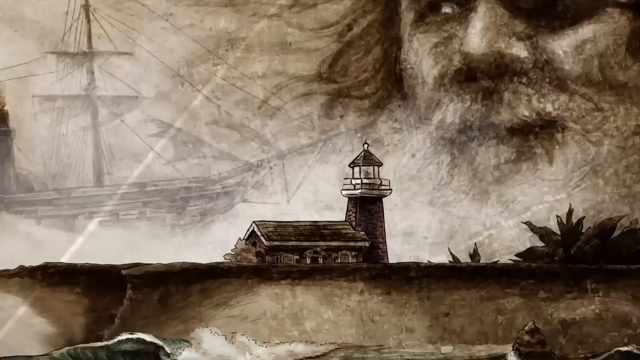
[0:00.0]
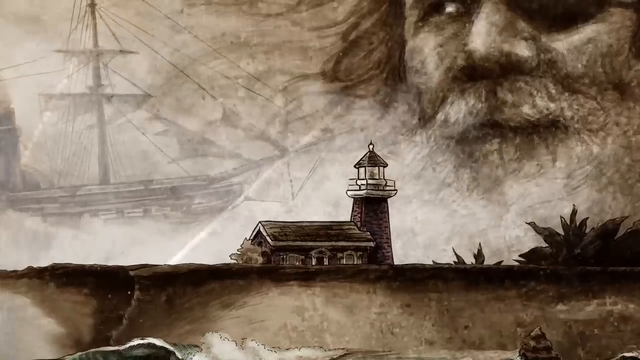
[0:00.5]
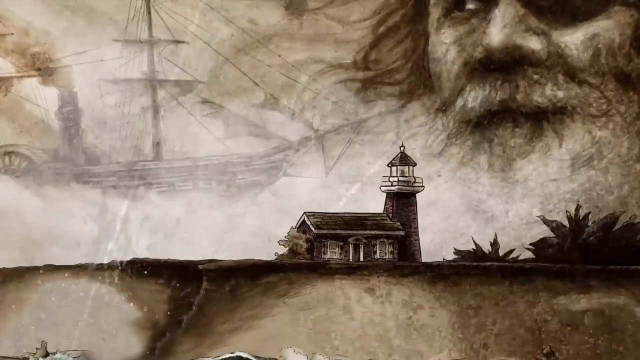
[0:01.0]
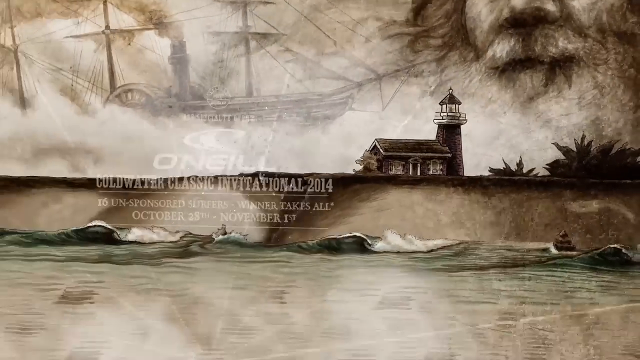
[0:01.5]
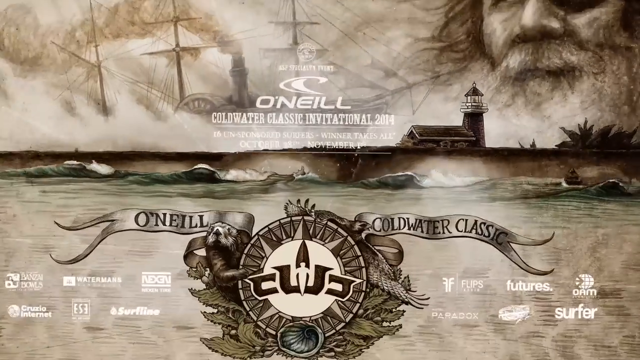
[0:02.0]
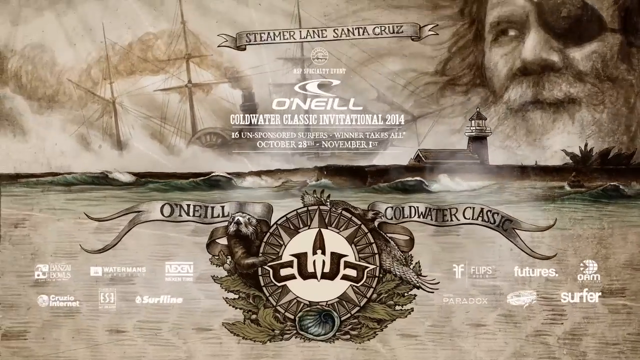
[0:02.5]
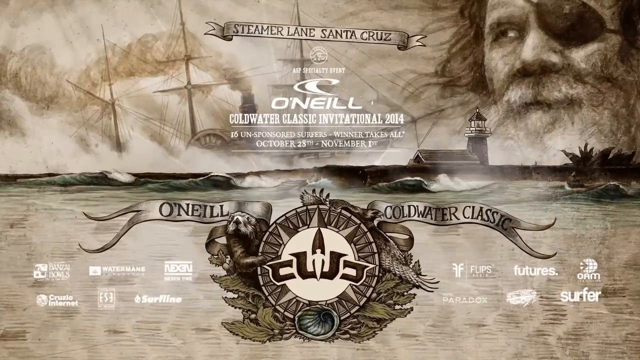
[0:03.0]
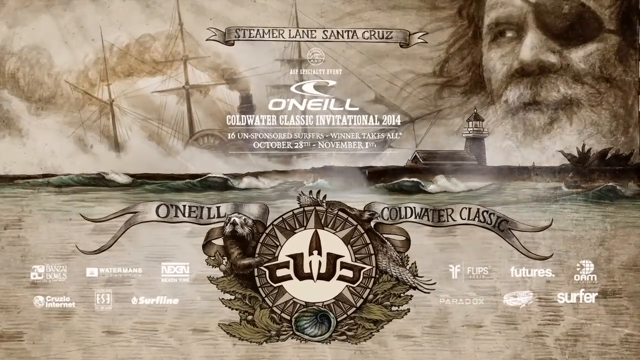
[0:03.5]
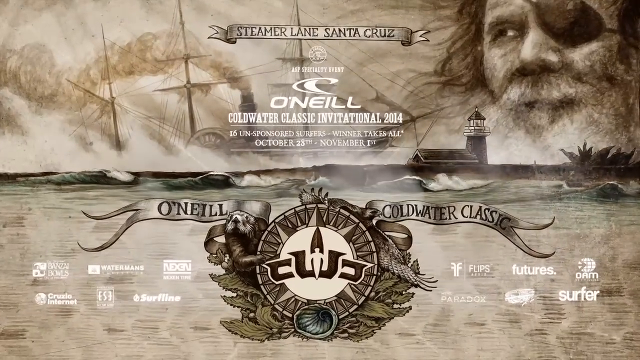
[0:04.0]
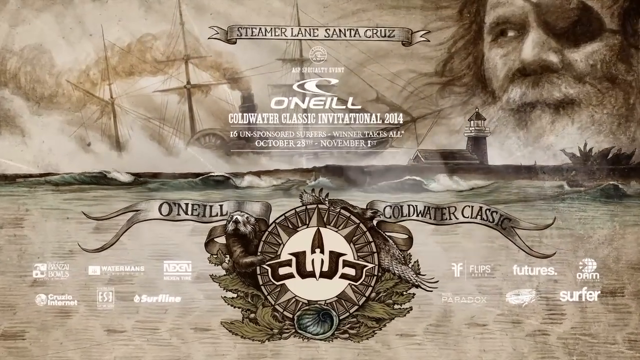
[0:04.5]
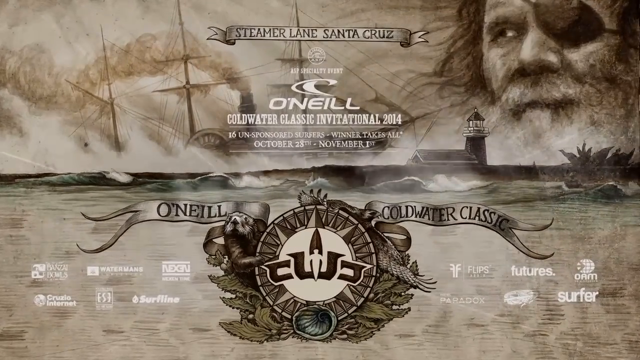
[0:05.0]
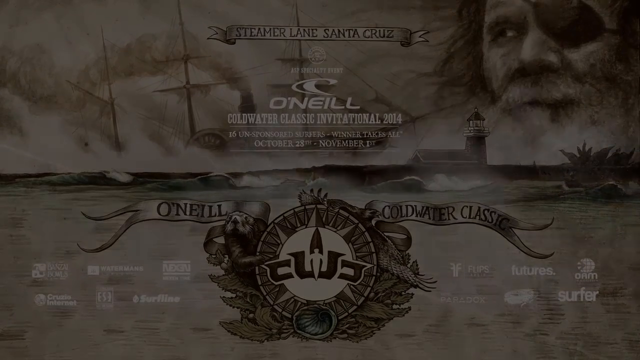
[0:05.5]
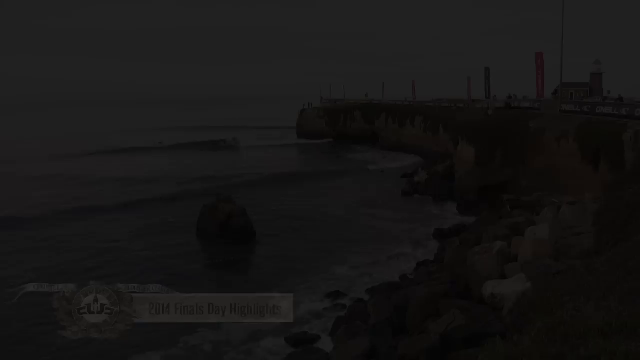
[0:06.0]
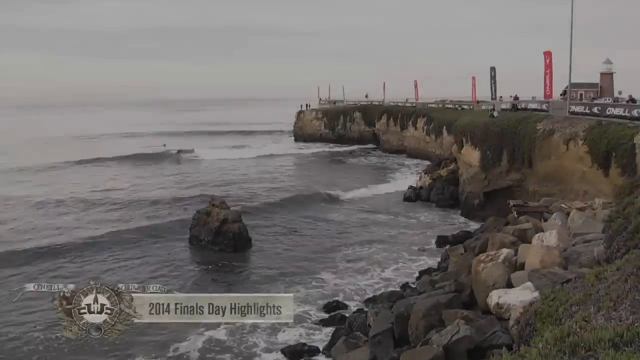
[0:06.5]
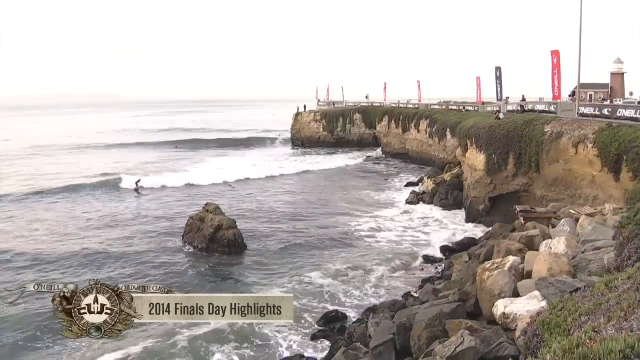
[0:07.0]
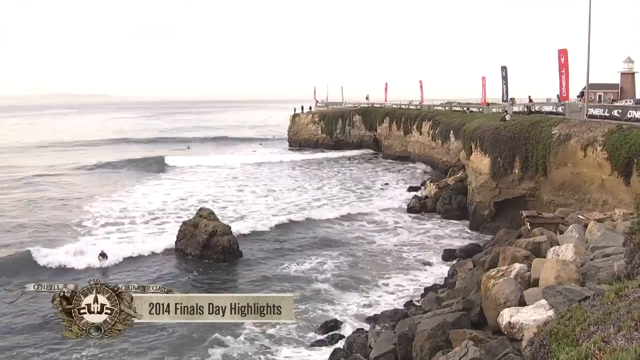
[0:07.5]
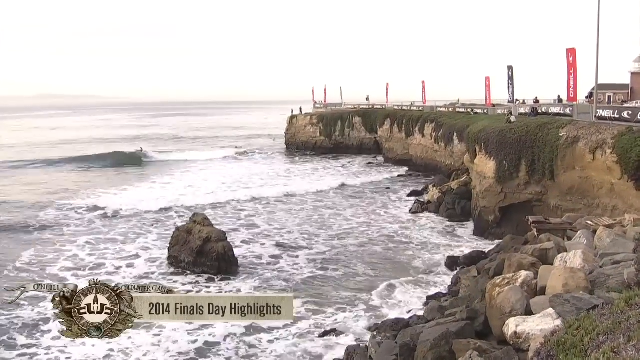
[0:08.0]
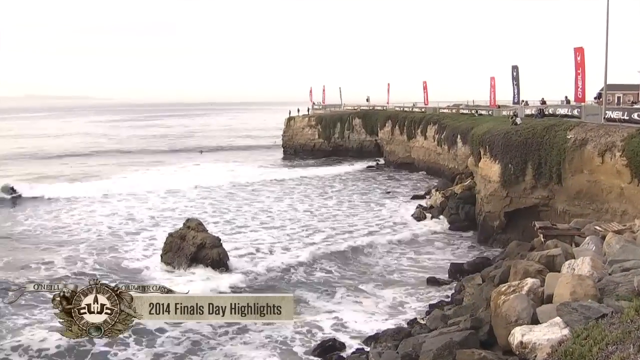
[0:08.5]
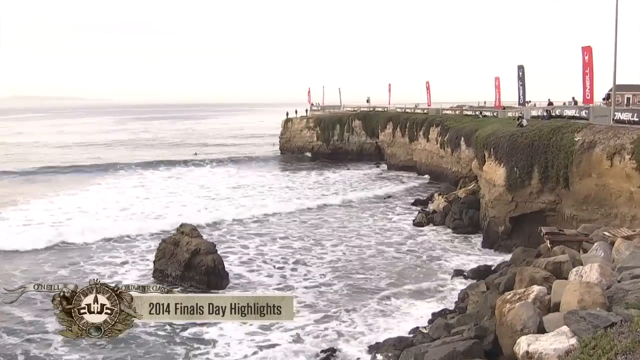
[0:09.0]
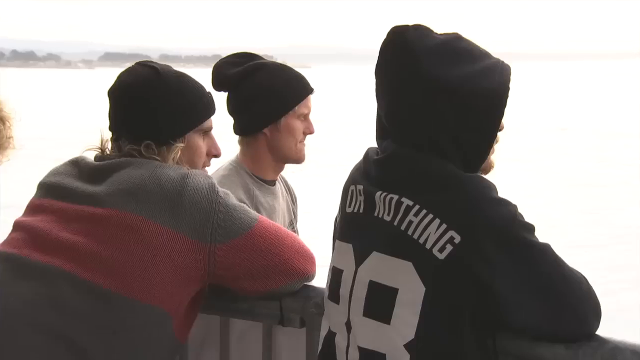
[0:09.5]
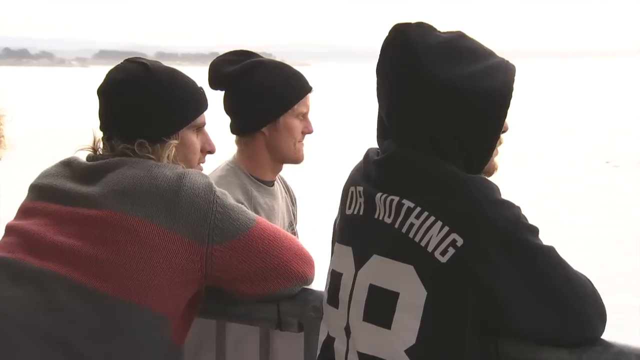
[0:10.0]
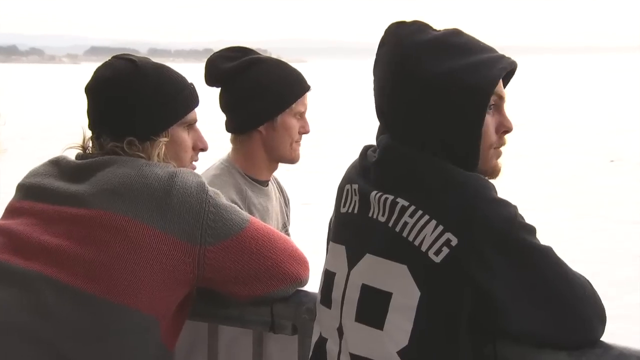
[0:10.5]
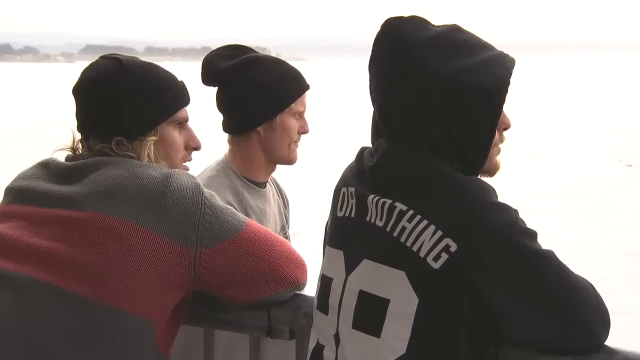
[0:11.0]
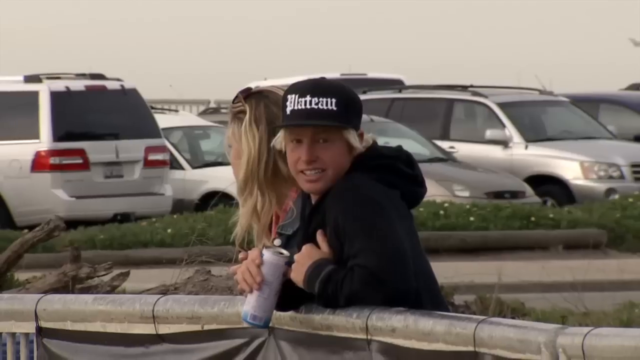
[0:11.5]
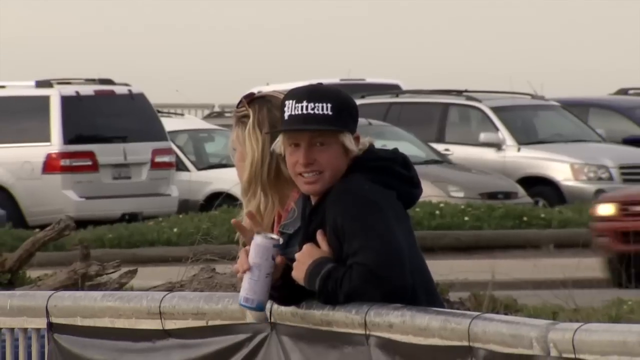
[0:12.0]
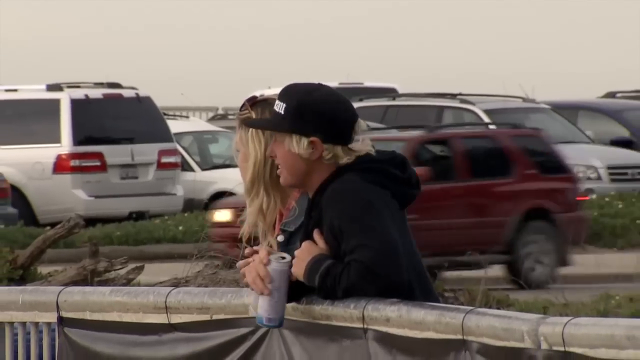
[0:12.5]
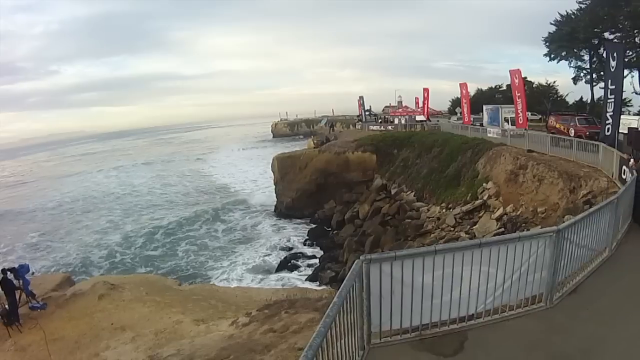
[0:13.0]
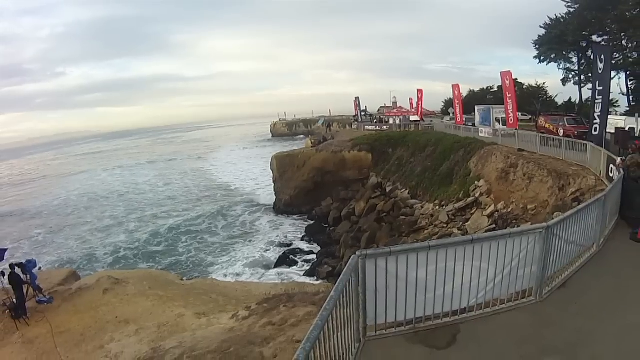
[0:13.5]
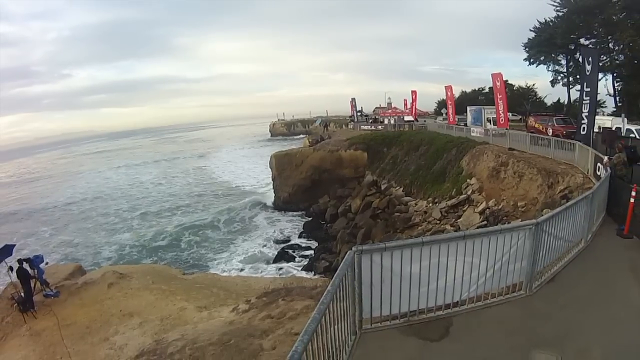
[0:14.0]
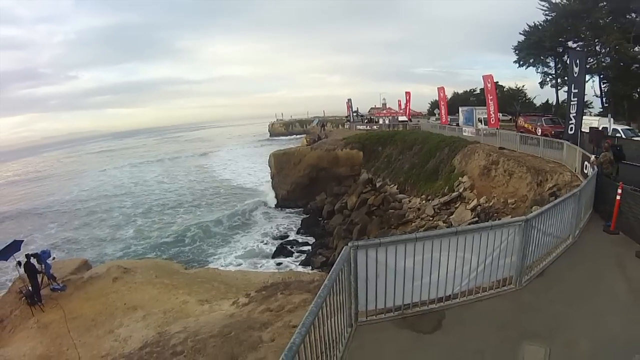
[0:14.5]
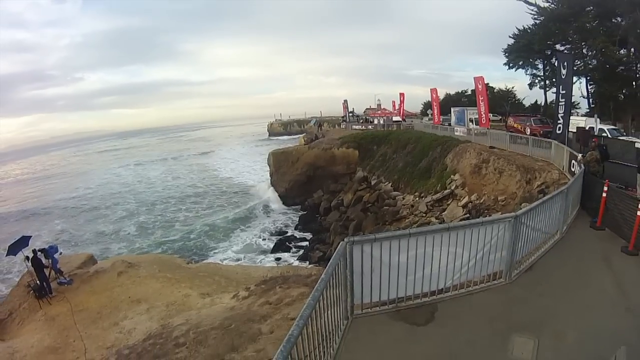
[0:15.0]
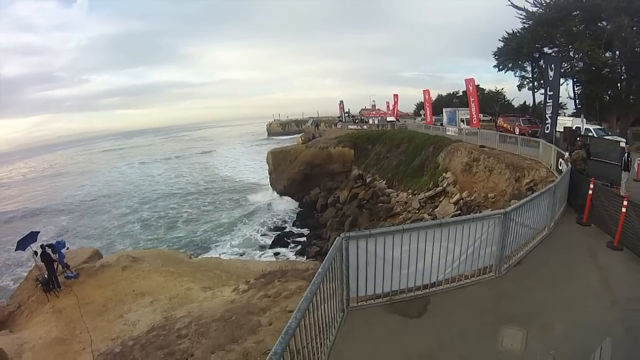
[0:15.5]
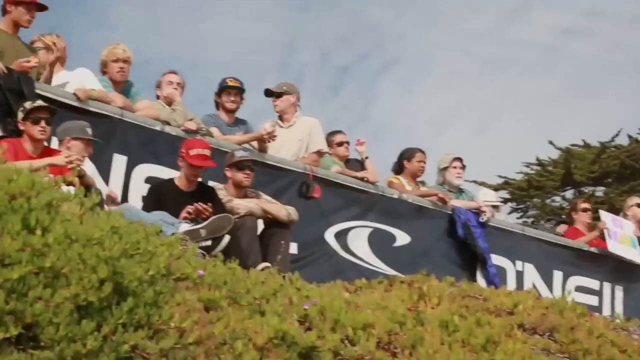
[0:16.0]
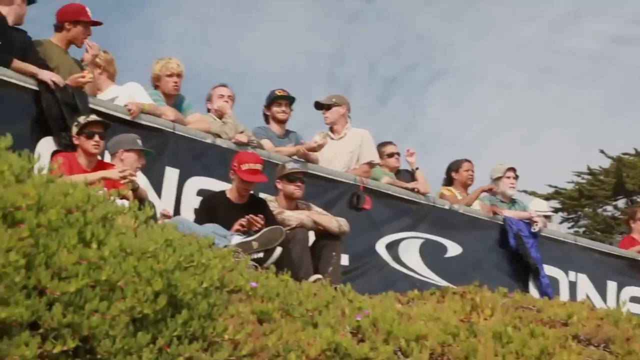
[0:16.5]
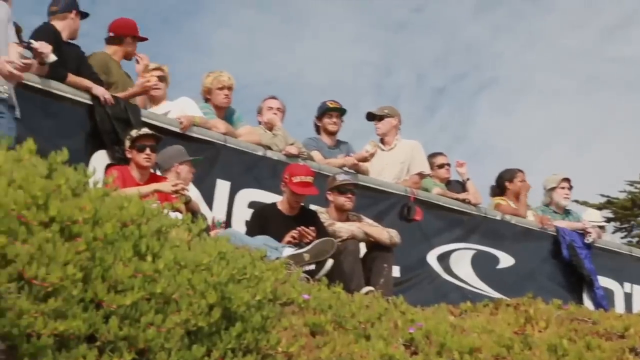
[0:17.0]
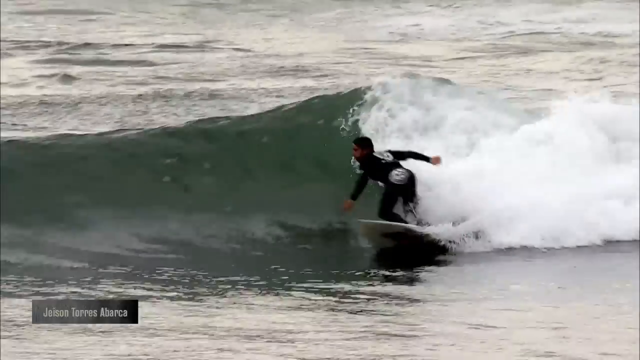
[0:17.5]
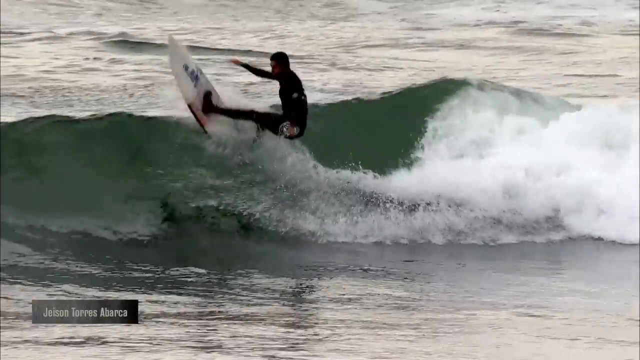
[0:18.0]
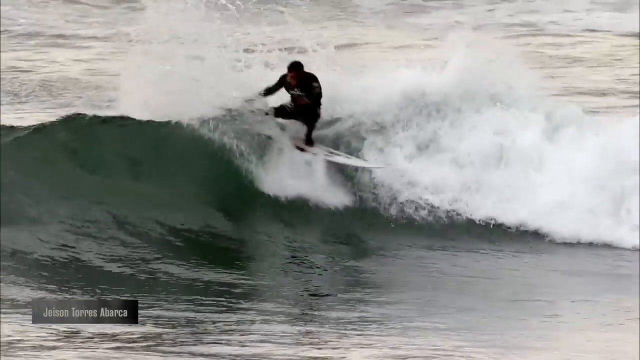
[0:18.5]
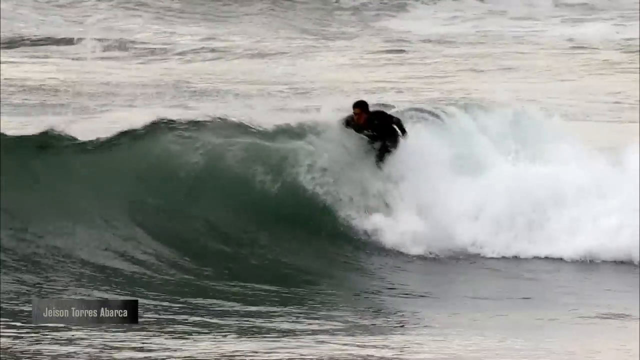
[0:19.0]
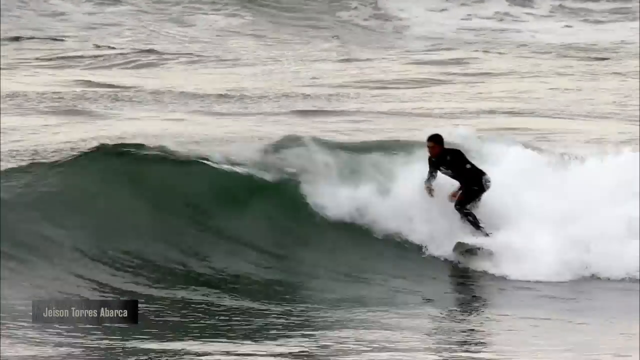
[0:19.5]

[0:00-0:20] A black and white illustration shows a lighthouse on a flat terrain. In the top right corner is an illustration of a man's face, looking to his right. On the left, above the lighthouse in the sky, is an illustration of a ship with torn sails; it looks like a wooden ship. The view zooms out to some kind of logo or emblem. In black text it says "O'Neill", and on the right, on a little flag-like shape, it says "Coldwater Classic". At the top of the screen, on another little banner-like shape, black text says "Steamer Lane Santa Cruz". Below that, white text says "O'Neill", with a small stylized white wave above the word, and below it the text reads "Coldwater Classic Invitational 2014". The scene then changes to live footage of a rocky shore.